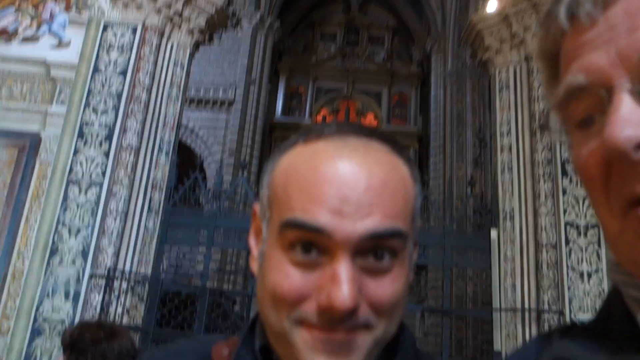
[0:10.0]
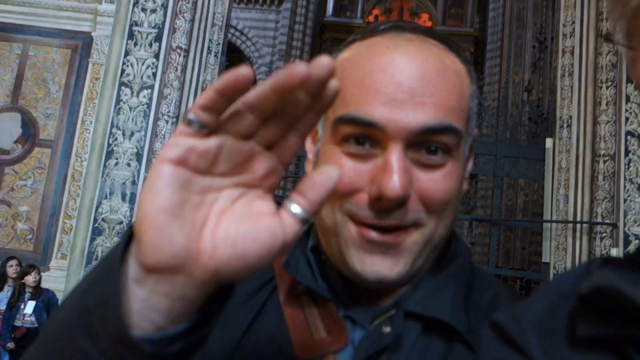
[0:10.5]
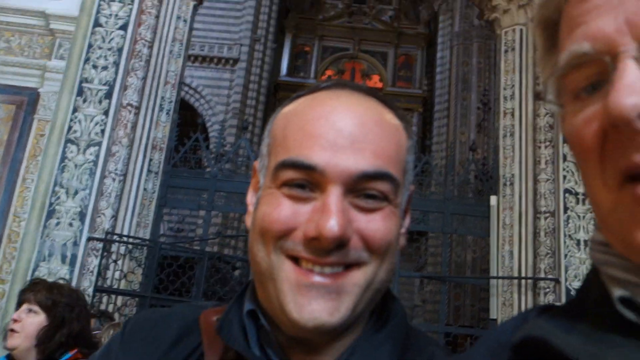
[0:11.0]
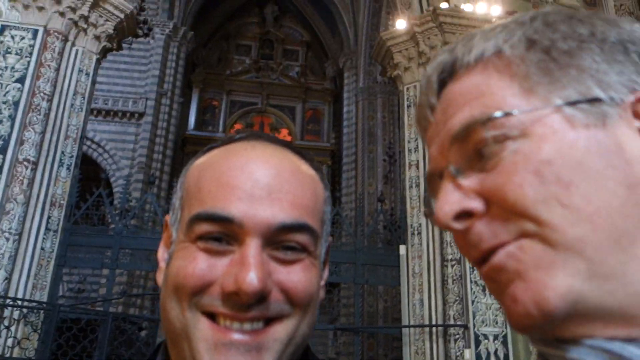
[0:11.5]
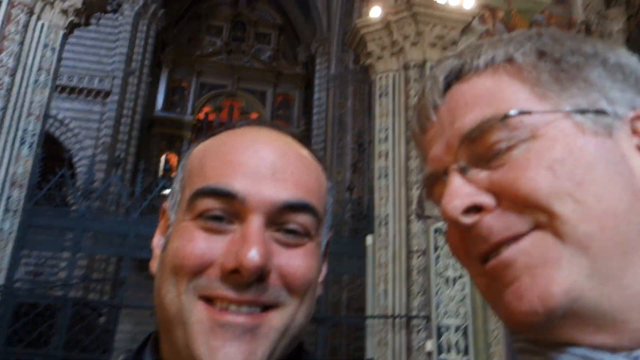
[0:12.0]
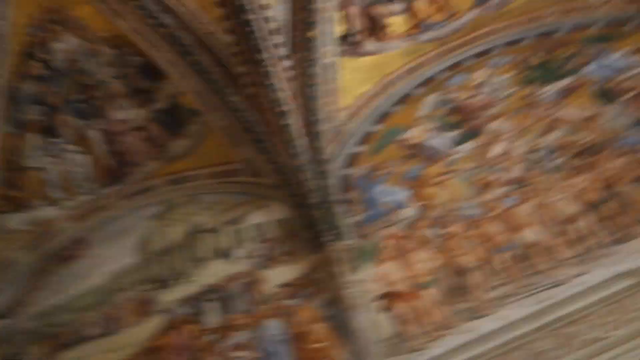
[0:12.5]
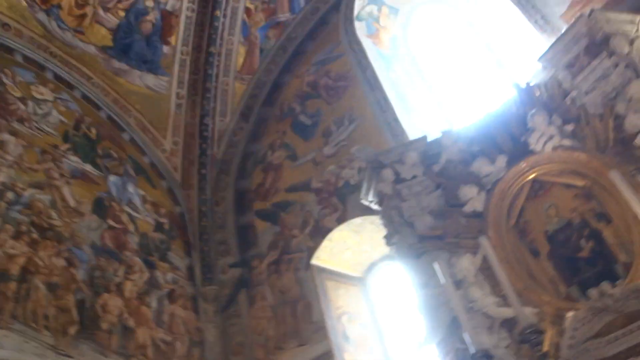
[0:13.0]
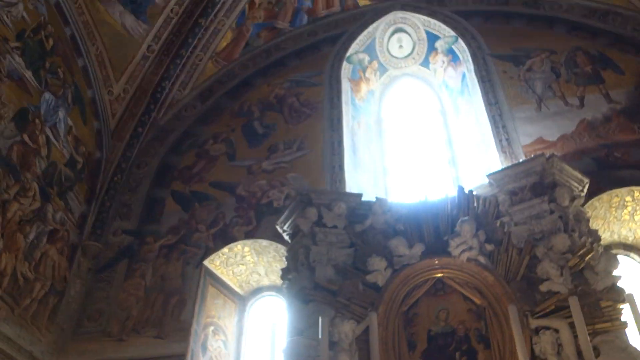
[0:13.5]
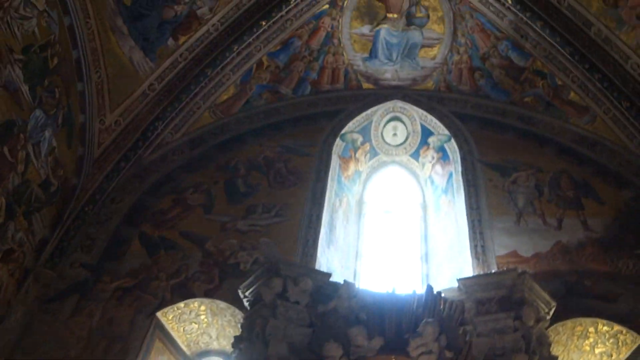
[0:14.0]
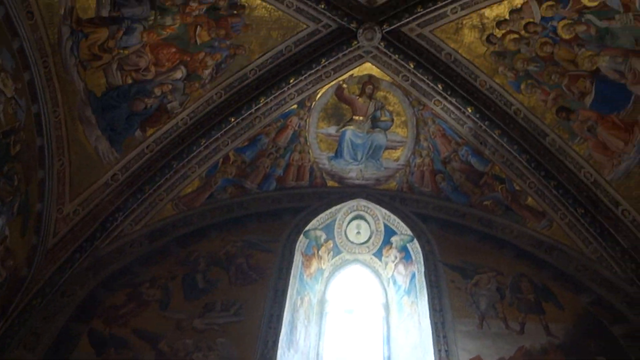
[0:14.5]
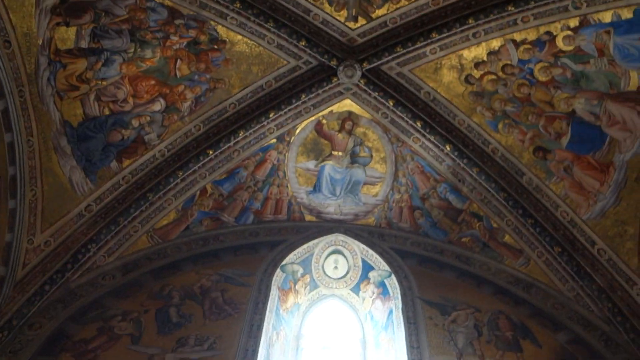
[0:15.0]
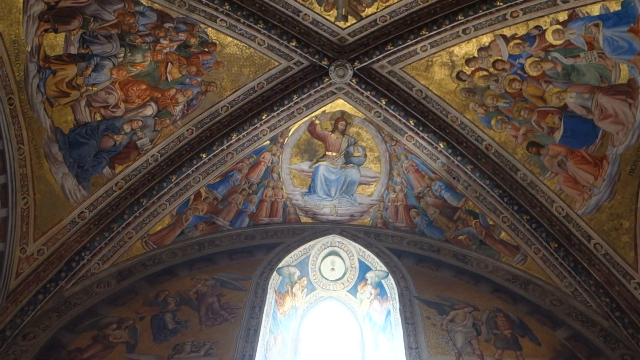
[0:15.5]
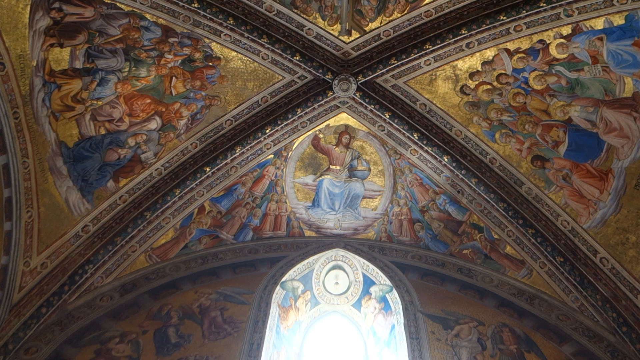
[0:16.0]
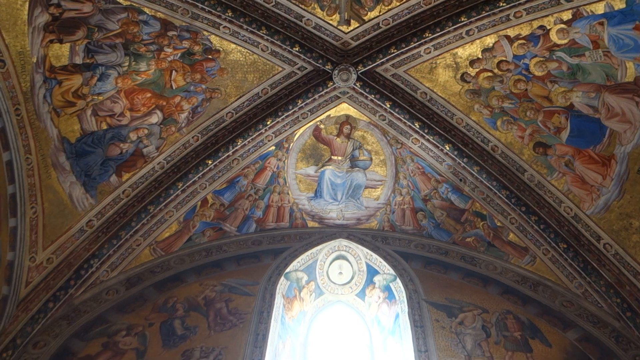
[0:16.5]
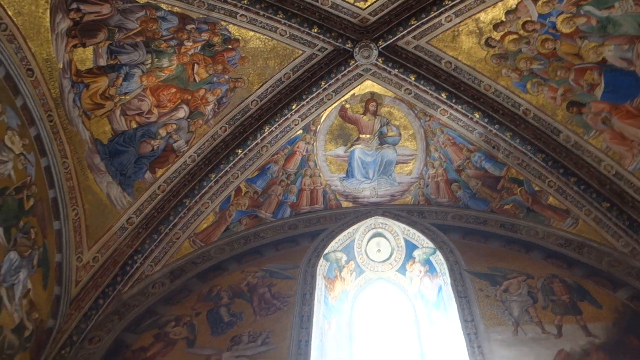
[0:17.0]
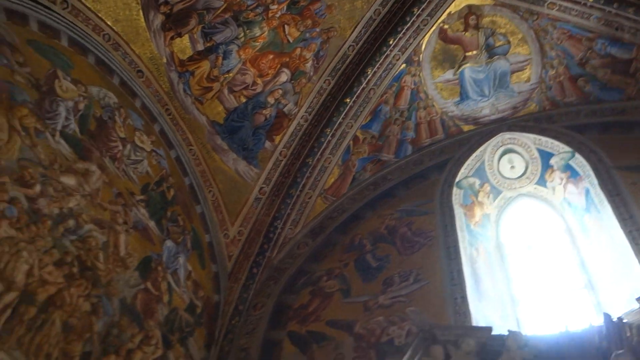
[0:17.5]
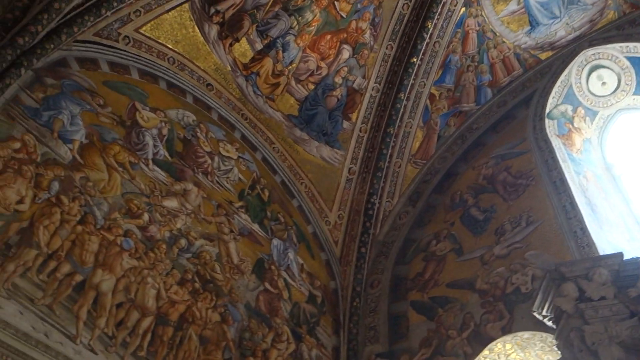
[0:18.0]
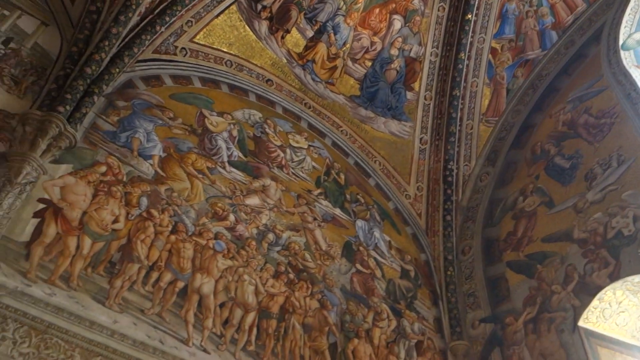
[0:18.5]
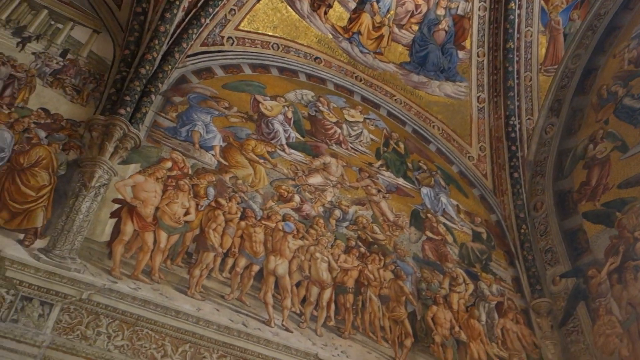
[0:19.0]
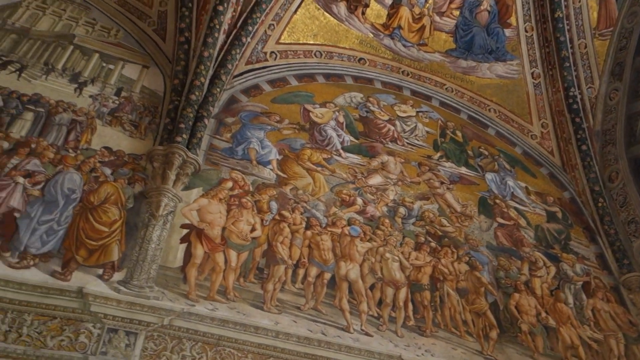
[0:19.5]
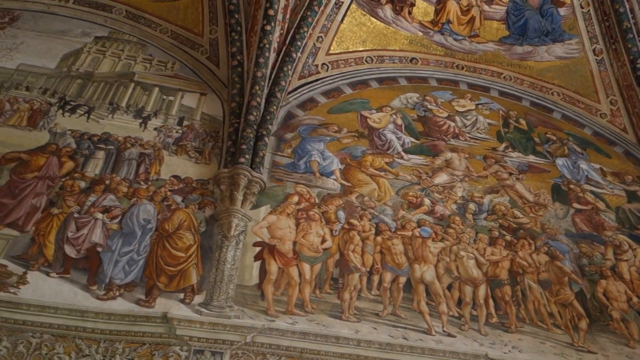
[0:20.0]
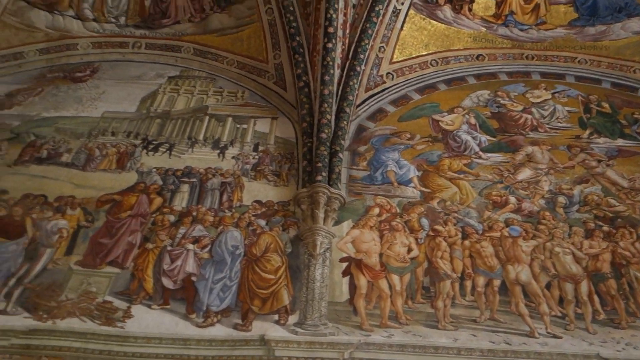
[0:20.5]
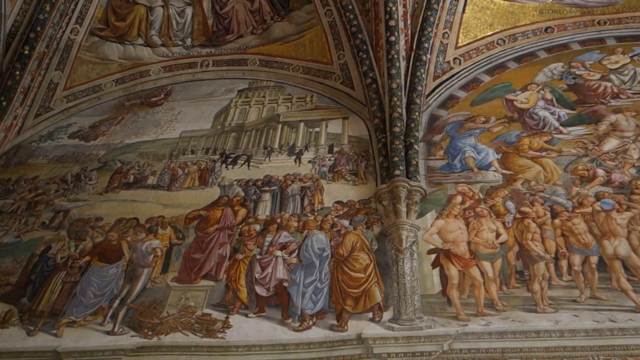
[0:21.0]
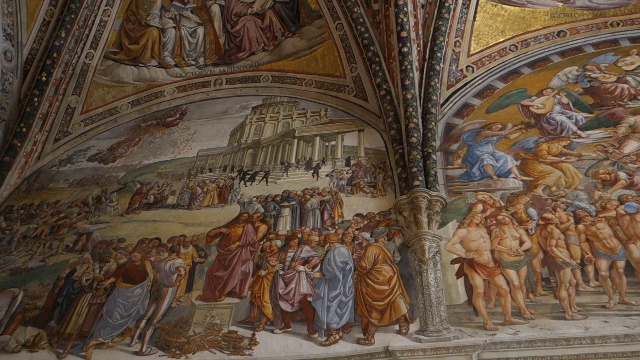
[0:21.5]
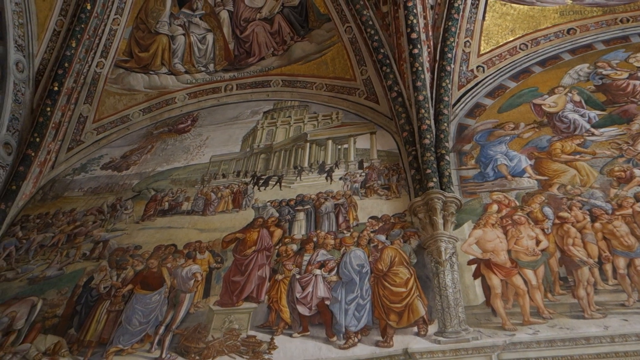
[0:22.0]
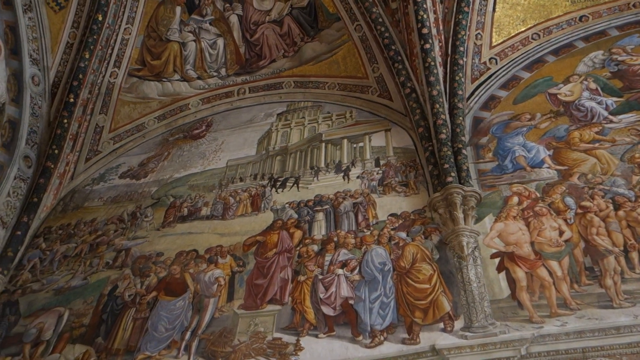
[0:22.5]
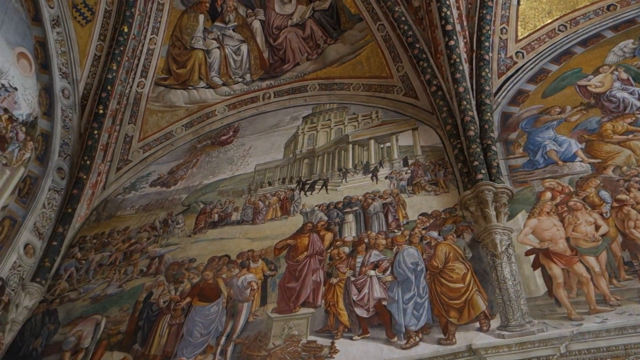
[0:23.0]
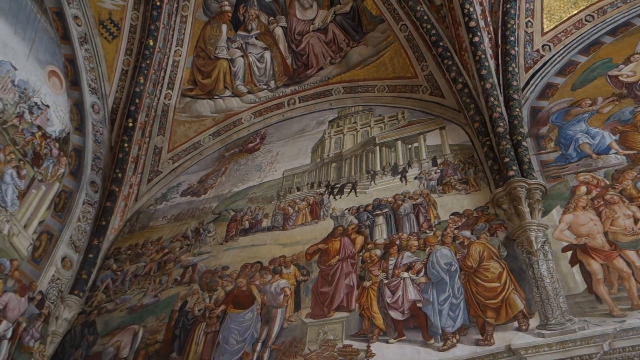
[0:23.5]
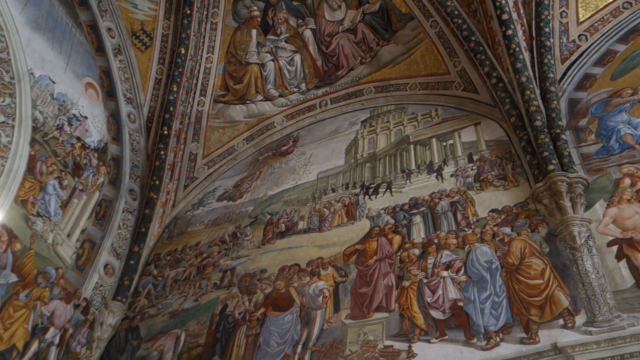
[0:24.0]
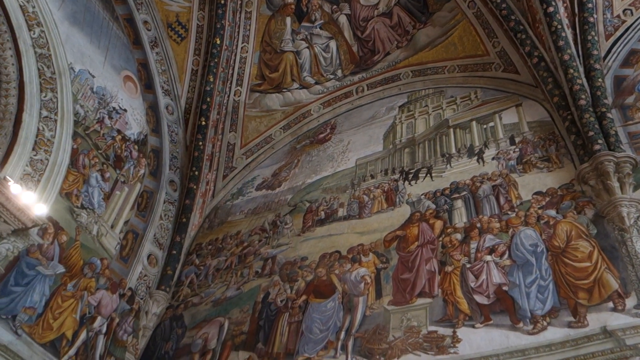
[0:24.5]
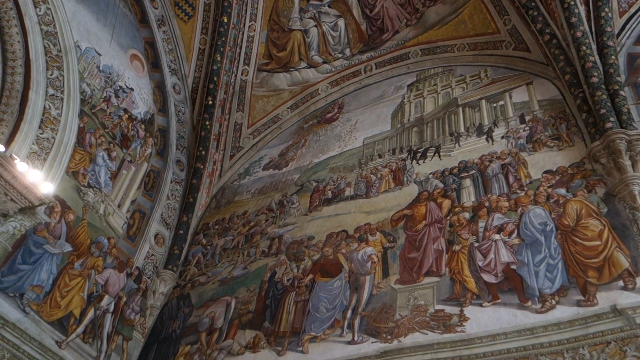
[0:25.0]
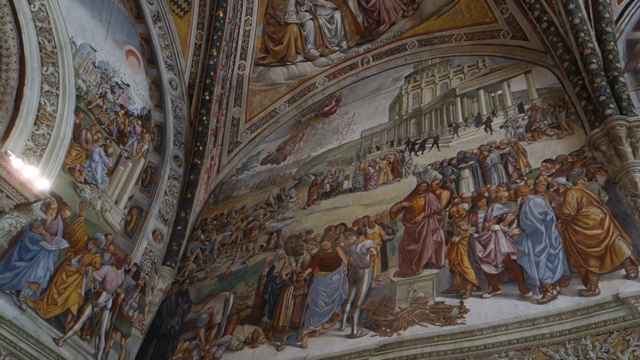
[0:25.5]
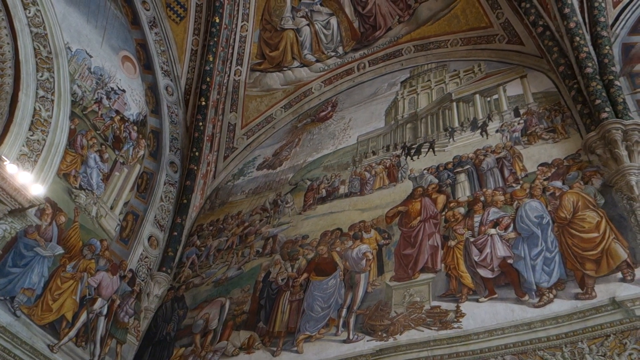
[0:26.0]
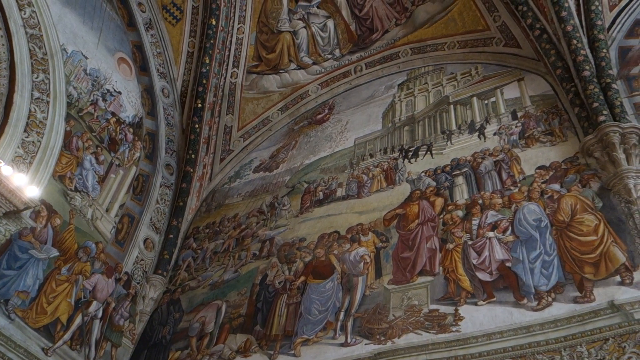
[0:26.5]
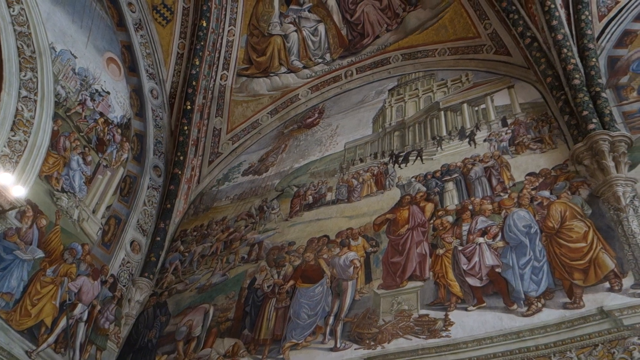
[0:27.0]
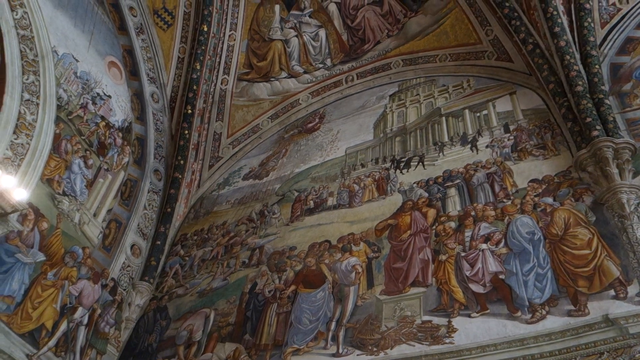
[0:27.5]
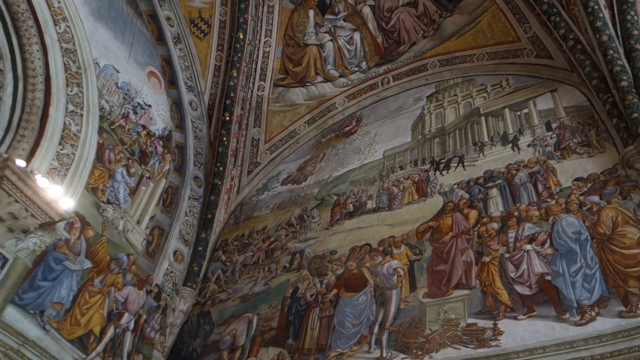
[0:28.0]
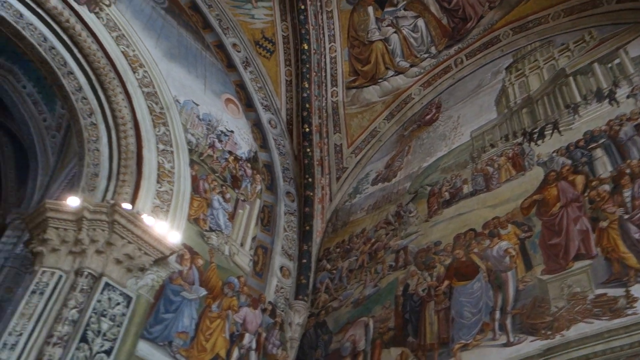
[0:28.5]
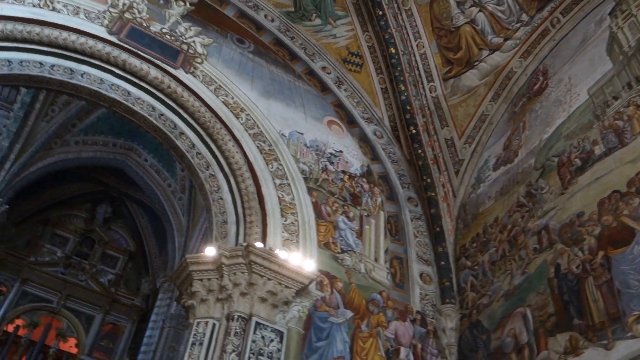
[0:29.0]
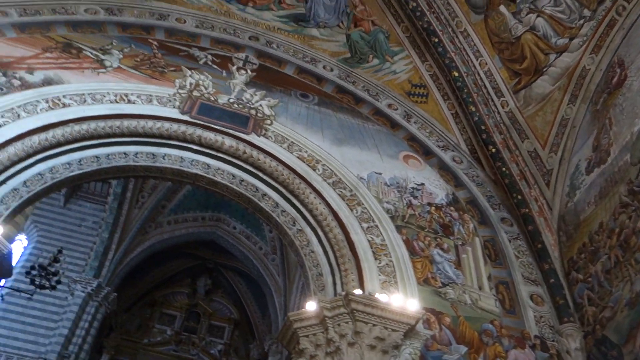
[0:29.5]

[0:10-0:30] The same two white males remain in view. The man holding the camera is taller than the second man; he has gray hair and wears glasses, a neck scarf and a black coat. The shorter man has balding gray hair and very thick, dark eyebrows, and he is smiling. He also wears a black coat, and he has a ring on his right pinky finger and thumb. The camera pans around the cathedral, showing stained glass windows, many religious images of Jesus, and an archway. Many people are in the background. Glaring light comes through the stained glass window, suggesting a bright sunny day outside. There is an image of Jesus holding a basket while sitting down.